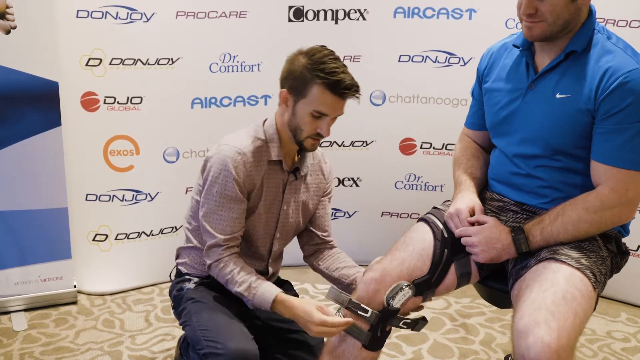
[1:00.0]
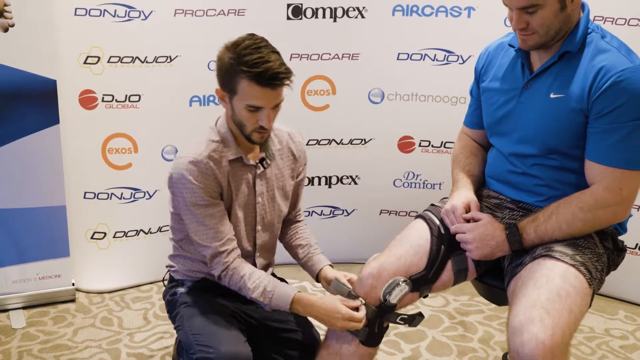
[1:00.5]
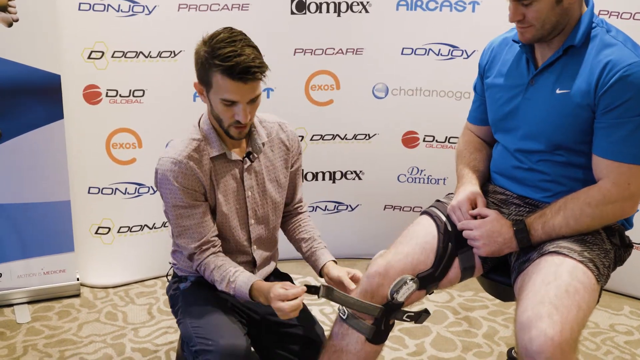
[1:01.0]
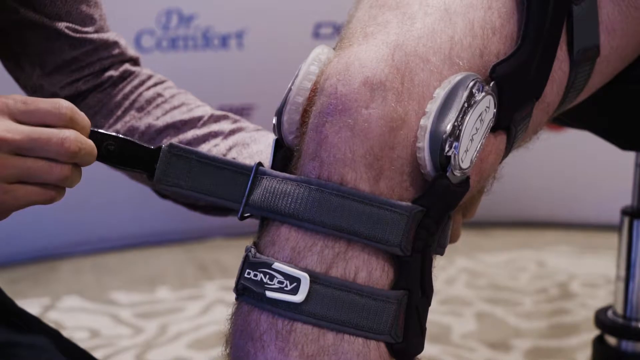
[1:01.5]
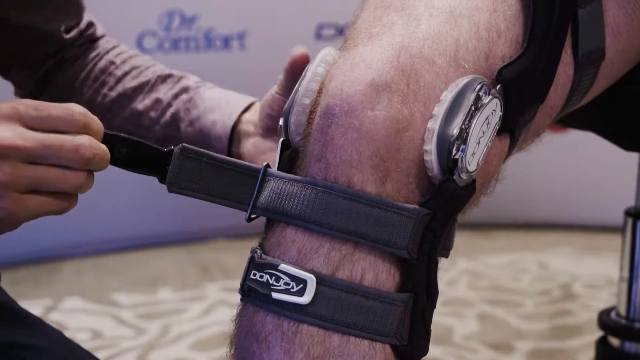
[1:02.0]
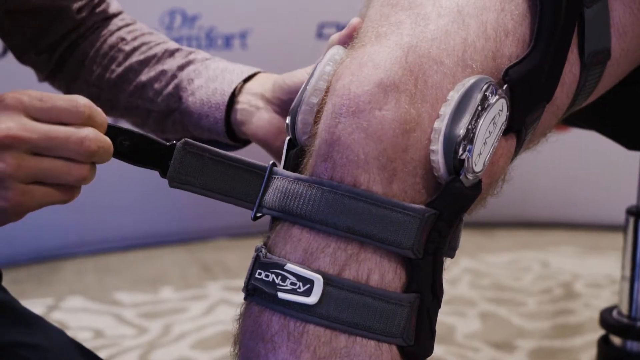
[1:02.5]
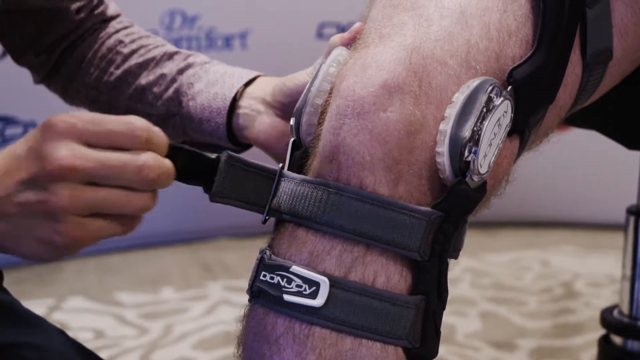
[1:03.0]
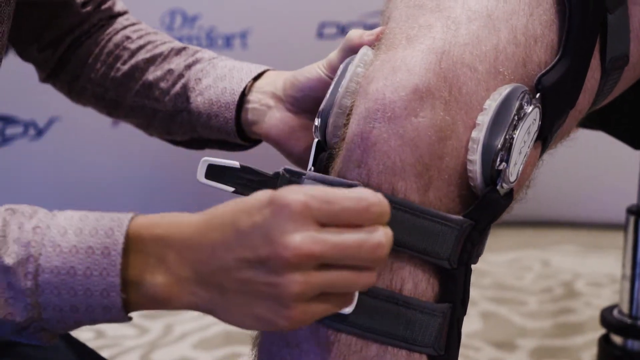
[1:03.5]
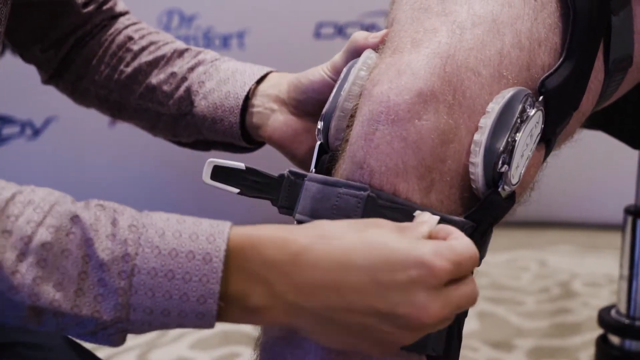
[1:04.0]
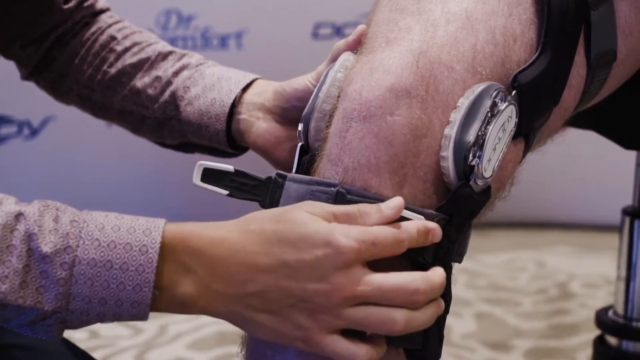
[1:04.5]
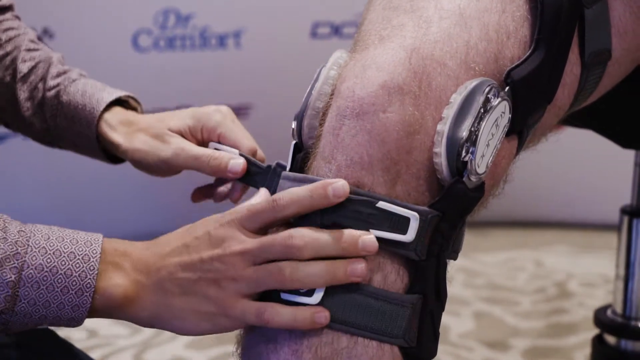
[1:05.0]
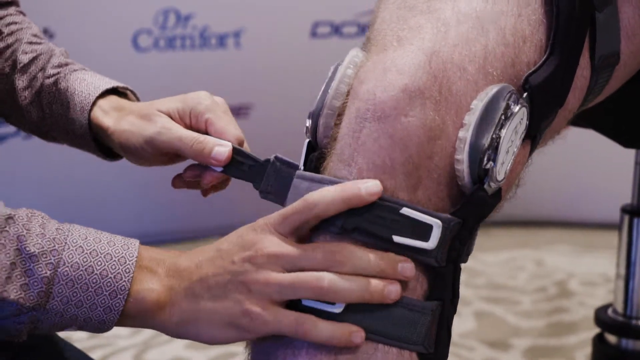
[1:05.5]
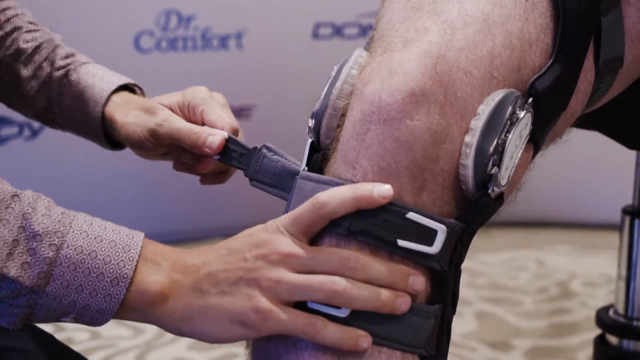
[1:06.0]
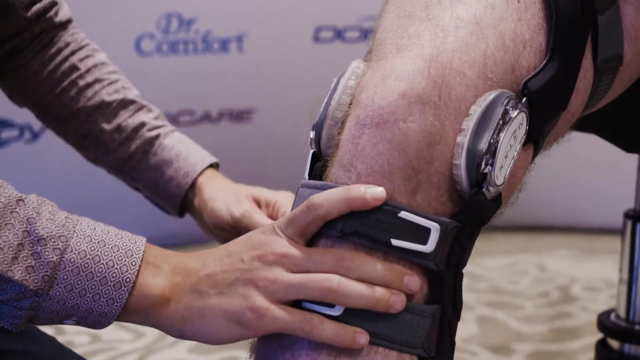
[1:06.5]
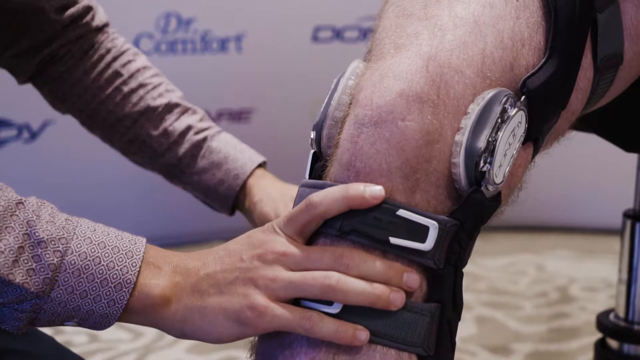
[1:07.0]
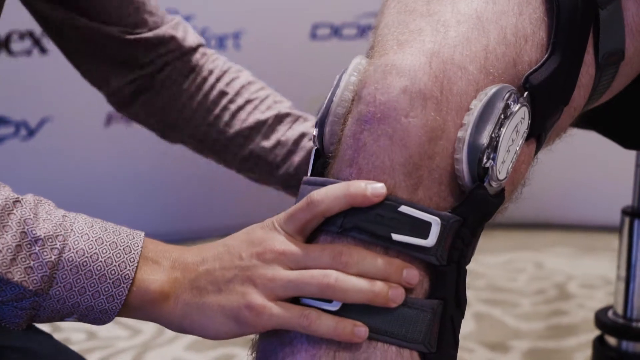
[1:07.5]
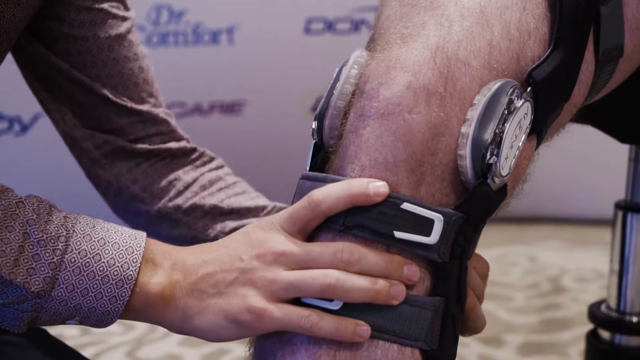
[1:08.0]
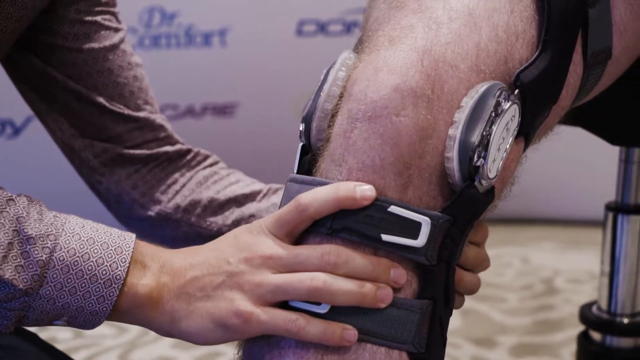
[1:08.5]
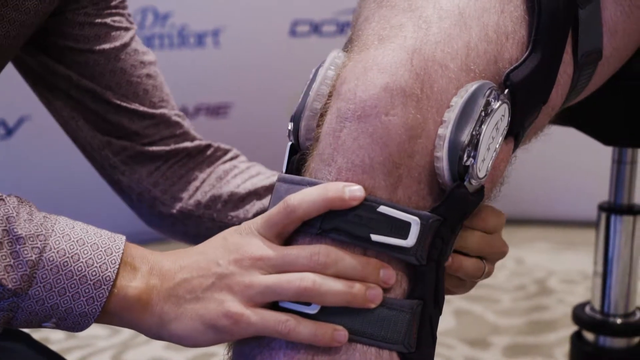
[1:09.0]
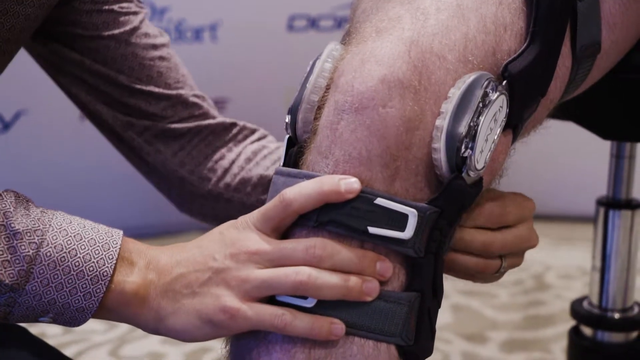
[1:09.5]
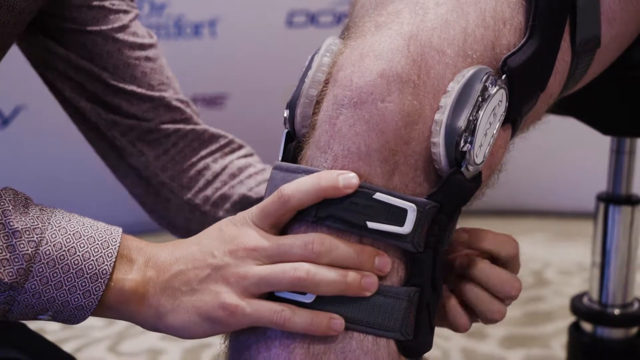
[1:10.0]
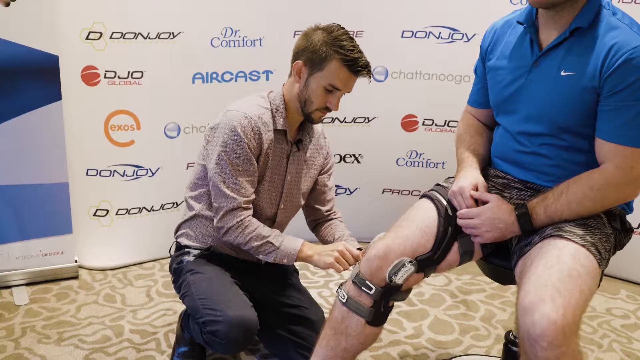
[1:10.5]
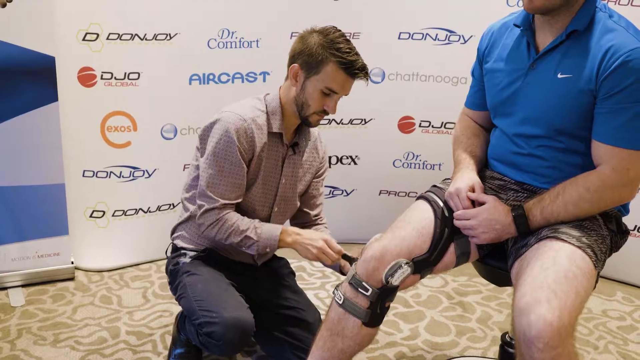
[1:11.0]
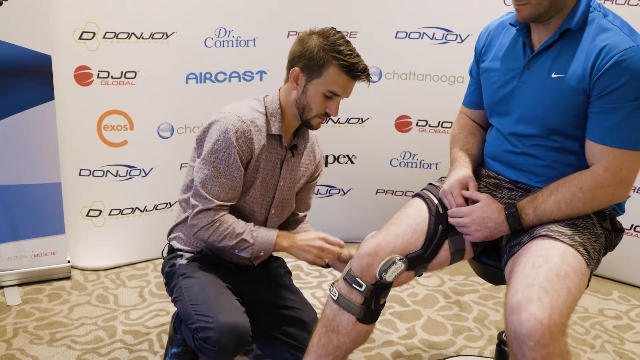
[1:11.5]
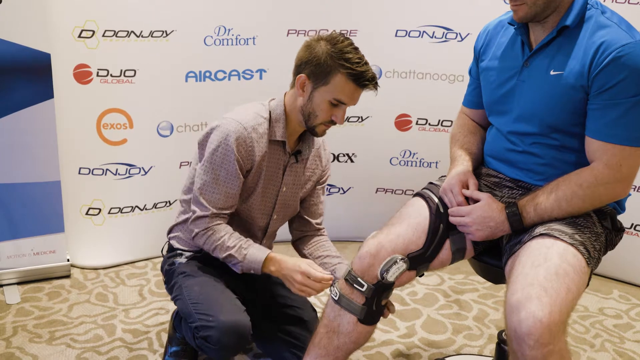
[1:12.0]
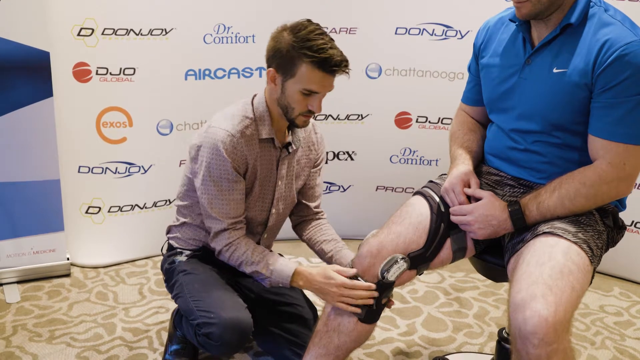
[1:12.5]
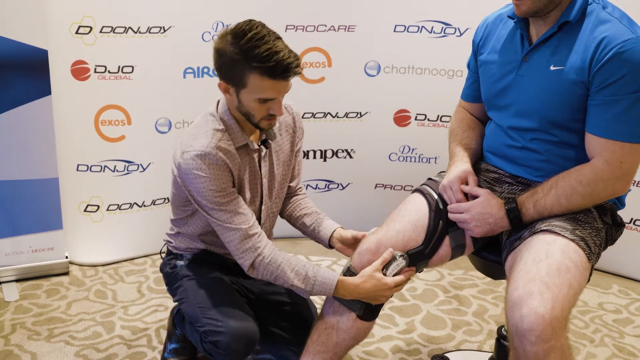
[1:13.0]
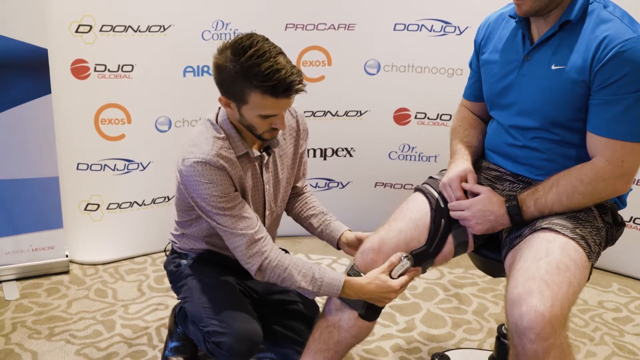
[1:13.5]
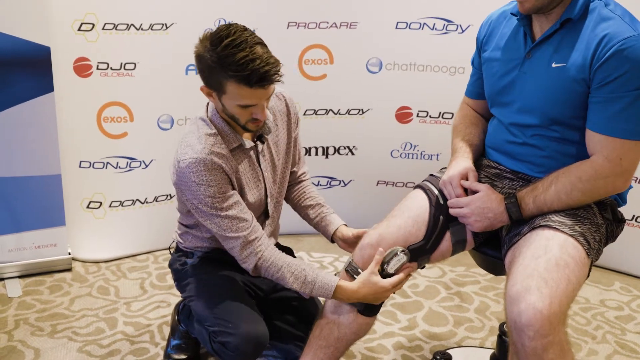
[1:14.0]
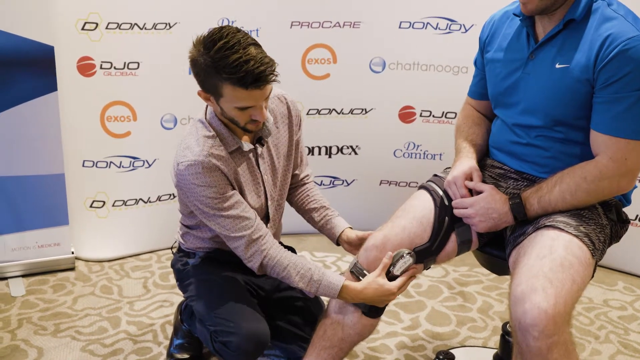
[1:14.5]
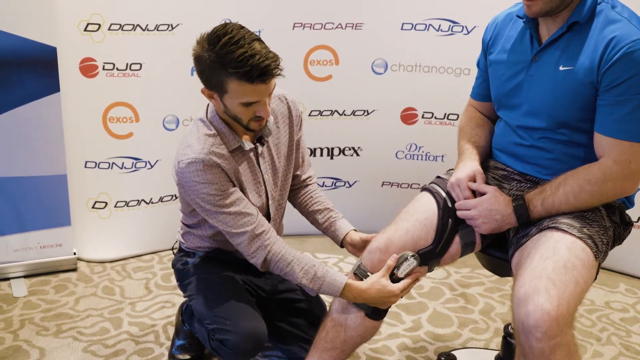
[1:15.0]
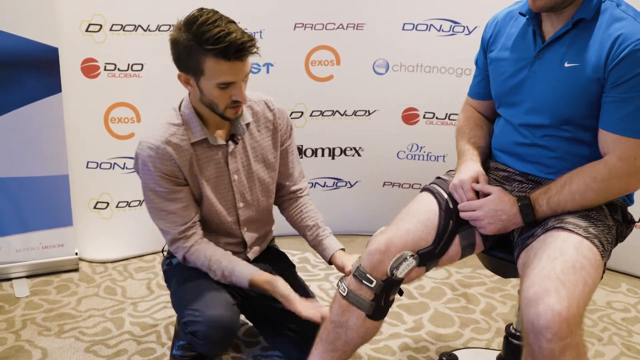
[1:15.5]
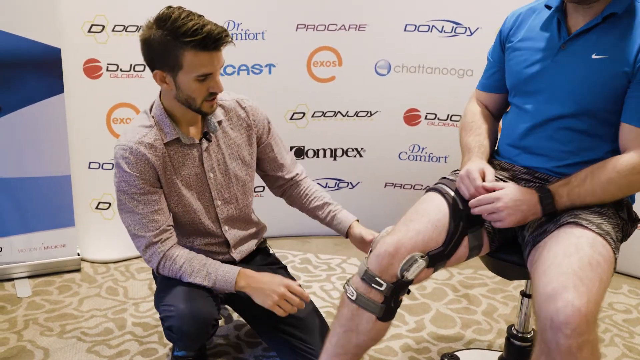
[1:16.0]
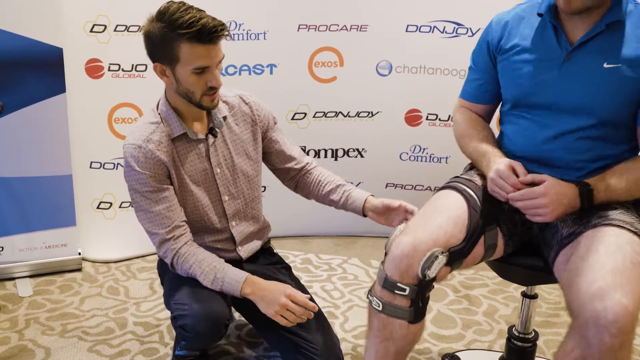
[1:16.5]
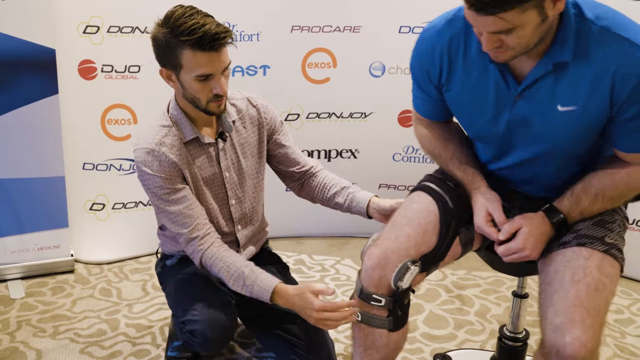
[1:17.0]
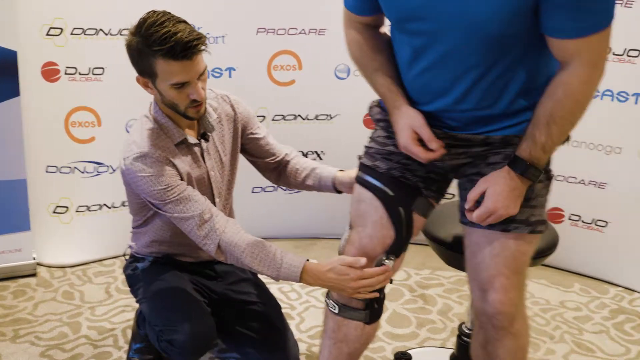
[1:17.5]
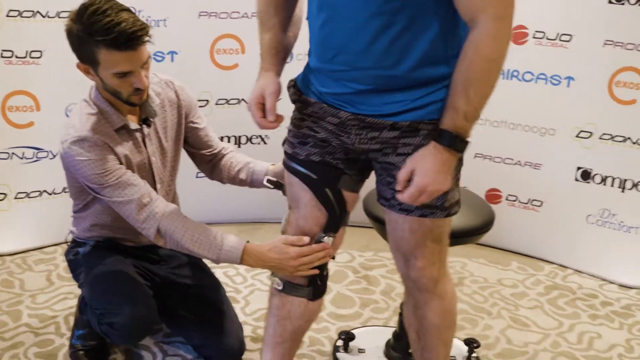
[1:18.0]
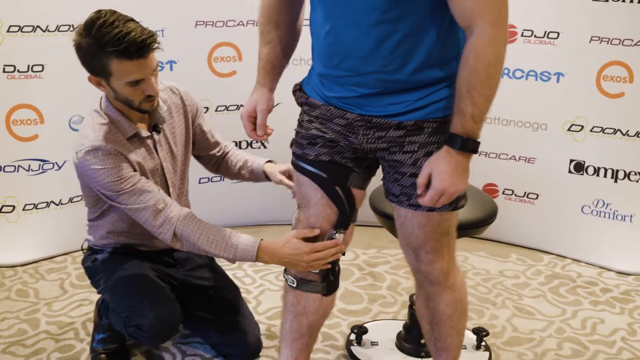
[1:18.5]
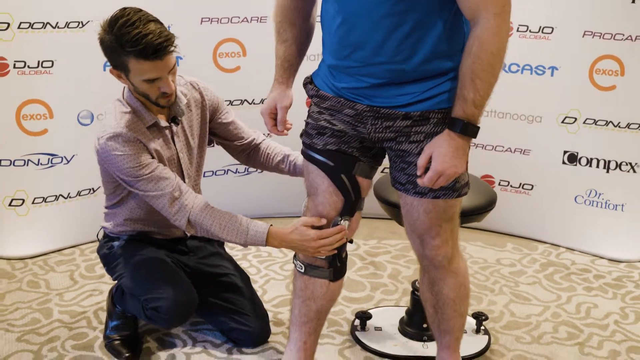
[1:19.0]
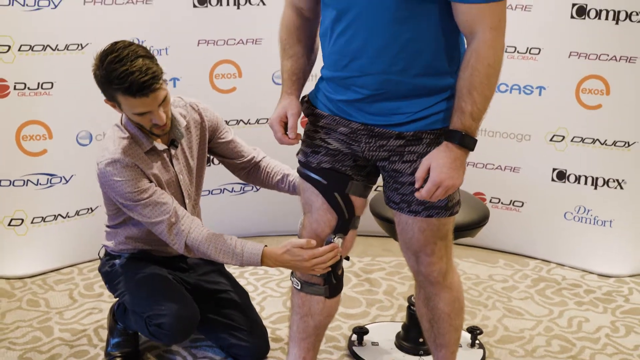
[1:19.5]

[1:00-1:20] One man sits in a chair with a black strappy brace around his knee and thigh while another man kneels in front of him, buckling up the straps. A close-up shows a gray strap pulled across, starting around the inner shin area, going across the top of the shin and through a little loop; he pulls it through the loop and back over the shin, where there is something like a velcro end that he sticks down. He does this to a few more straps, making sure everything is strapped down tight. The camera then zooms out to a wider view of the man sitting on the chair while the other man, on one knee, tightens the straps. He gives the brace a little shake around the knee and motions for the man to stand up. The man stands up while the other man keeps his hand on the knee area of the brace and gives it a little shake.